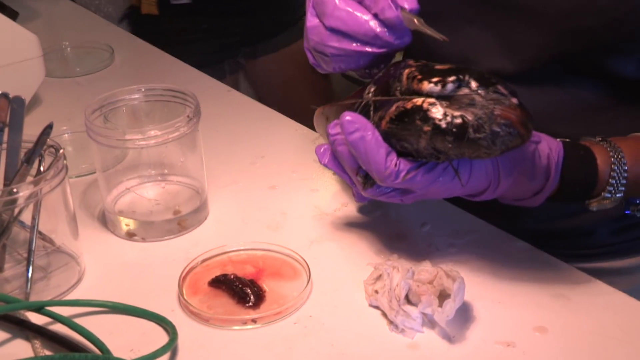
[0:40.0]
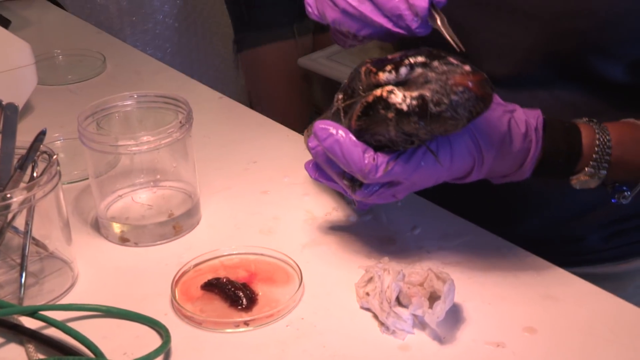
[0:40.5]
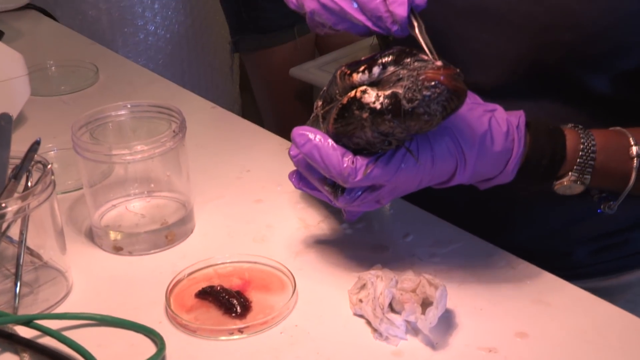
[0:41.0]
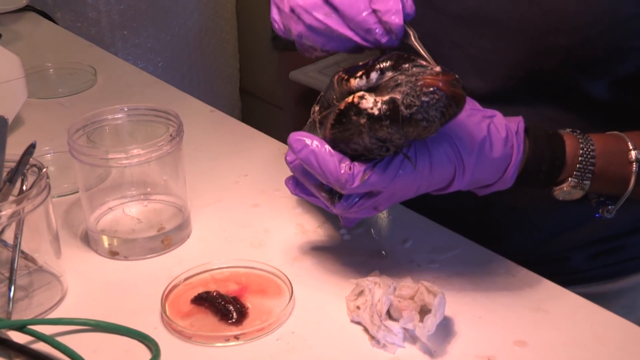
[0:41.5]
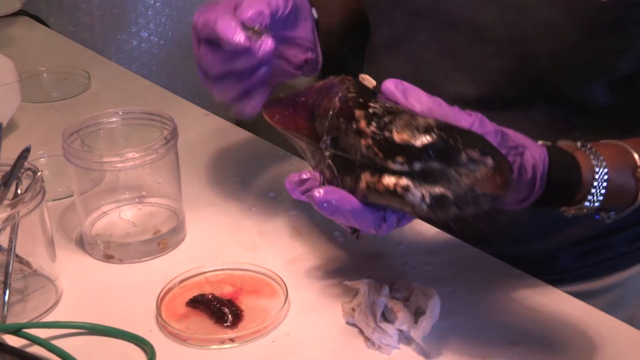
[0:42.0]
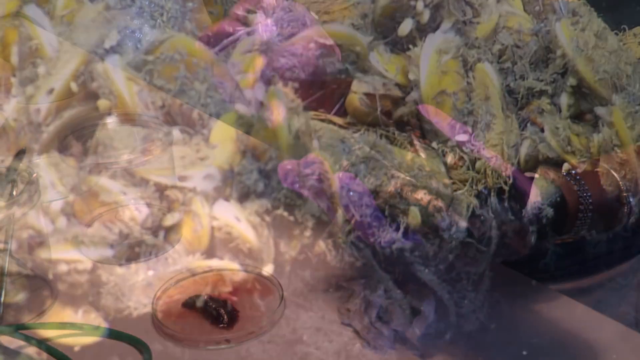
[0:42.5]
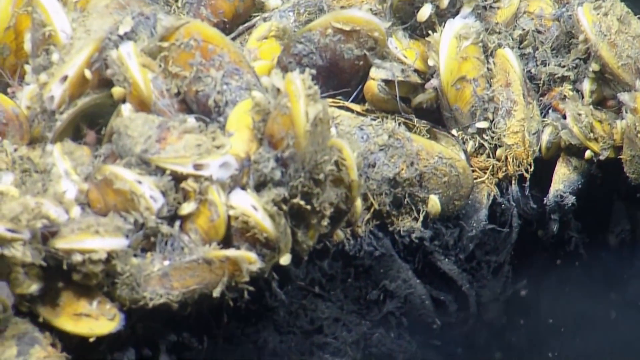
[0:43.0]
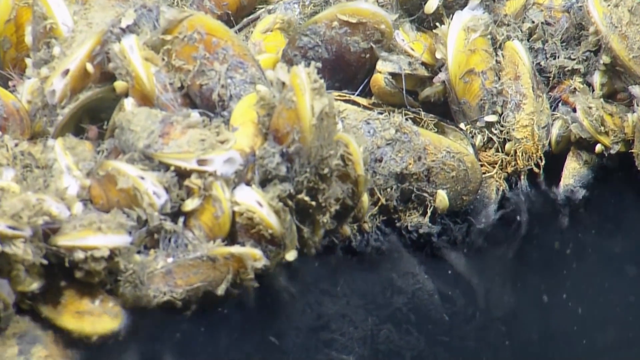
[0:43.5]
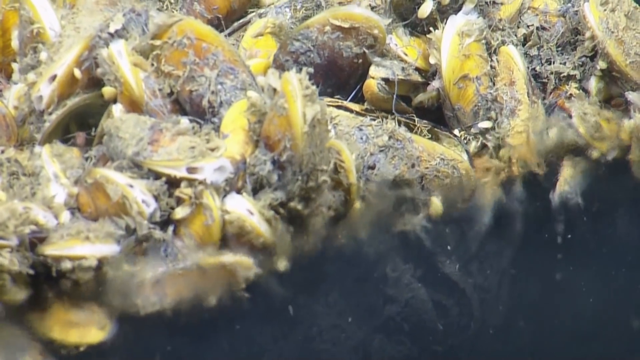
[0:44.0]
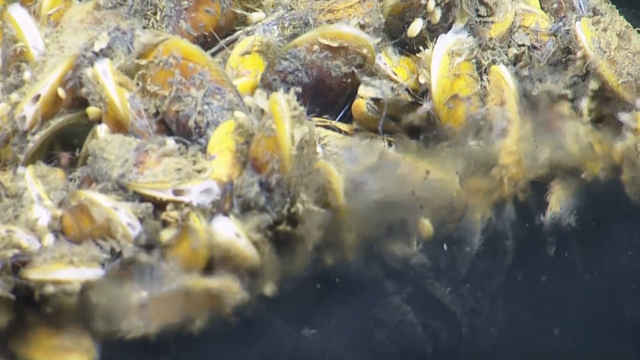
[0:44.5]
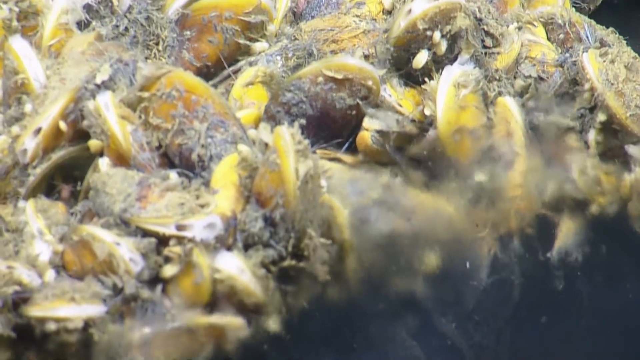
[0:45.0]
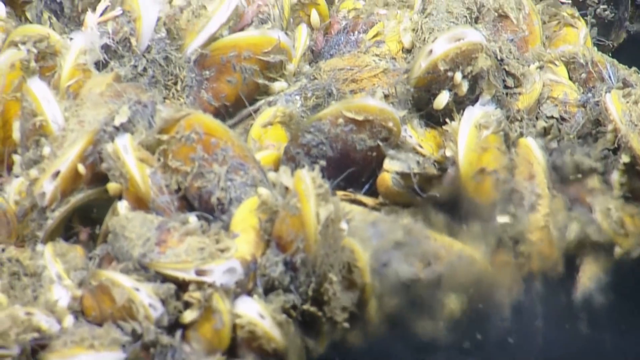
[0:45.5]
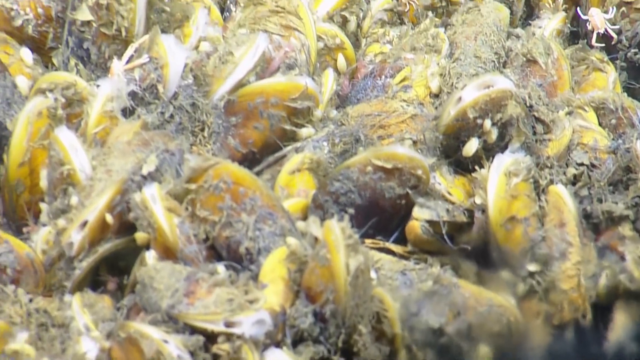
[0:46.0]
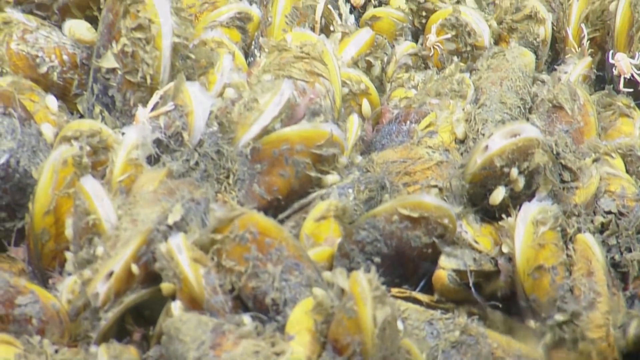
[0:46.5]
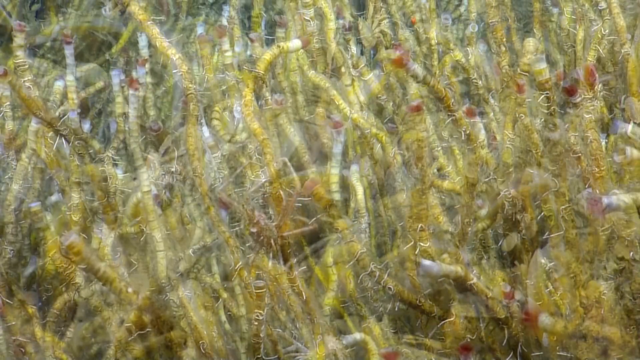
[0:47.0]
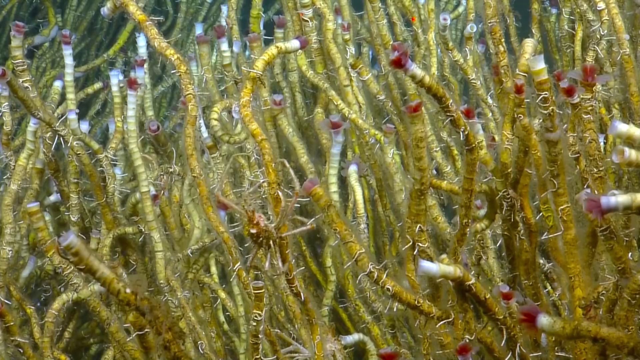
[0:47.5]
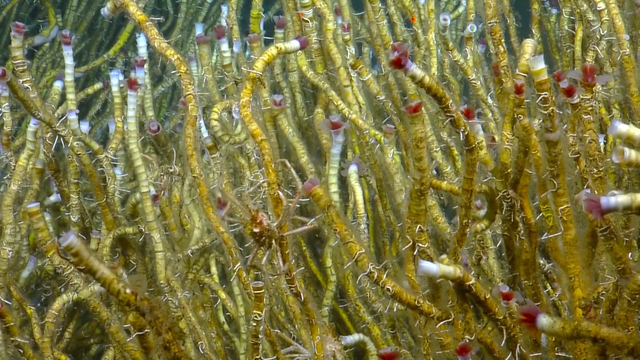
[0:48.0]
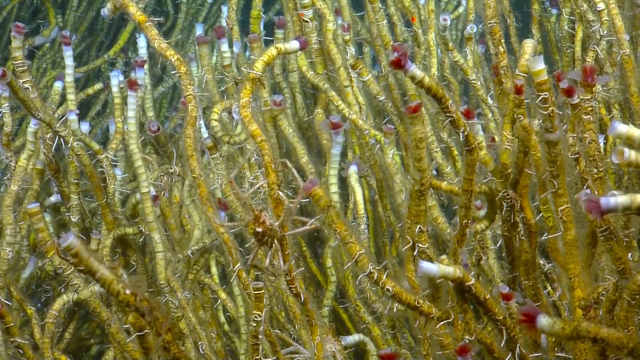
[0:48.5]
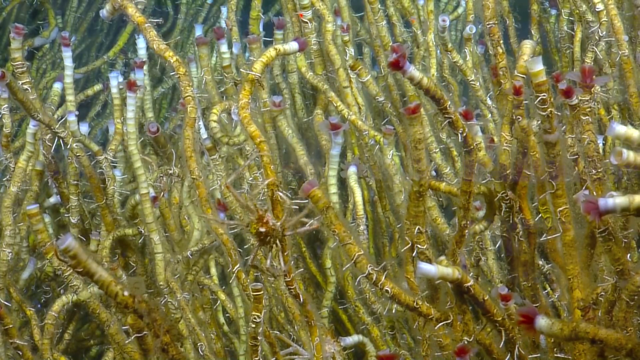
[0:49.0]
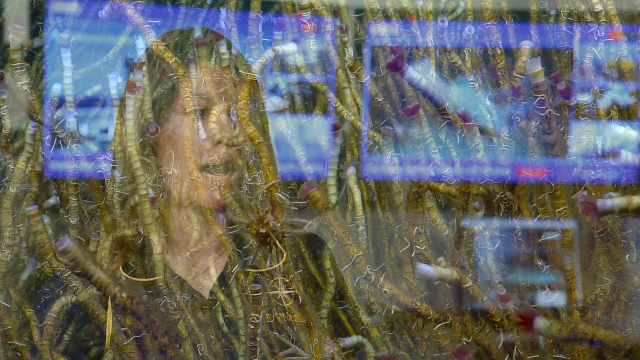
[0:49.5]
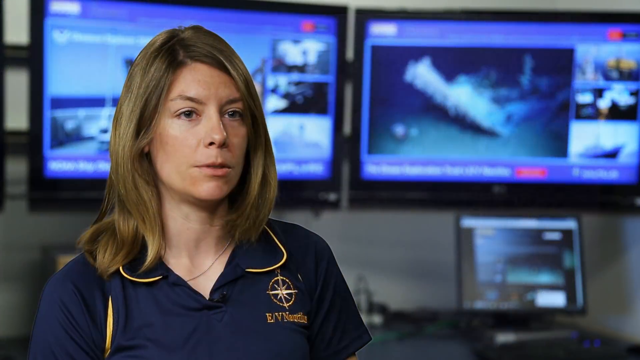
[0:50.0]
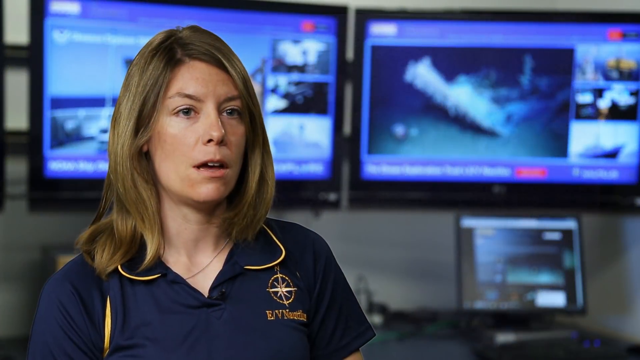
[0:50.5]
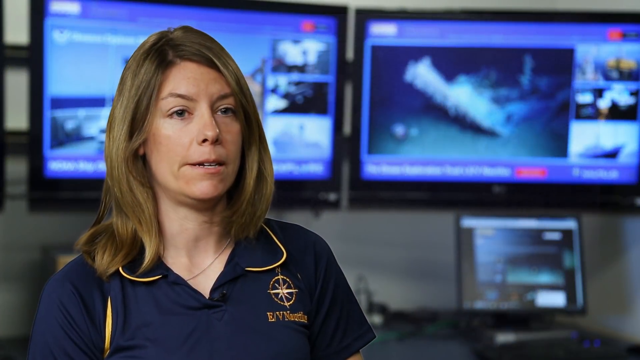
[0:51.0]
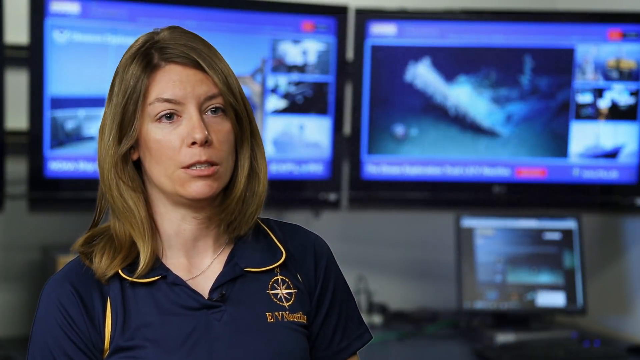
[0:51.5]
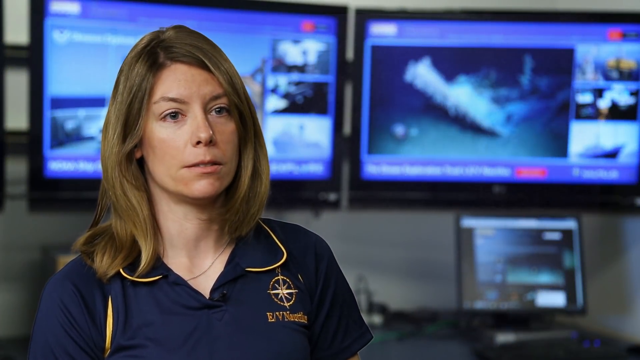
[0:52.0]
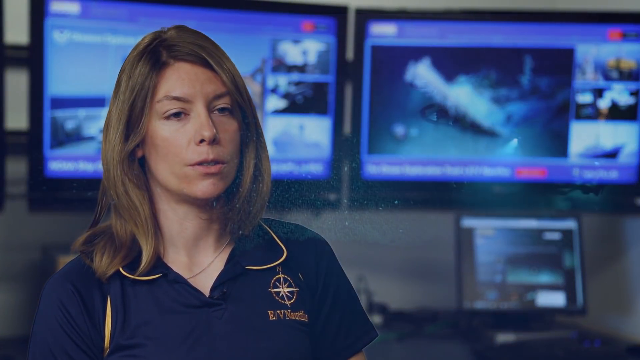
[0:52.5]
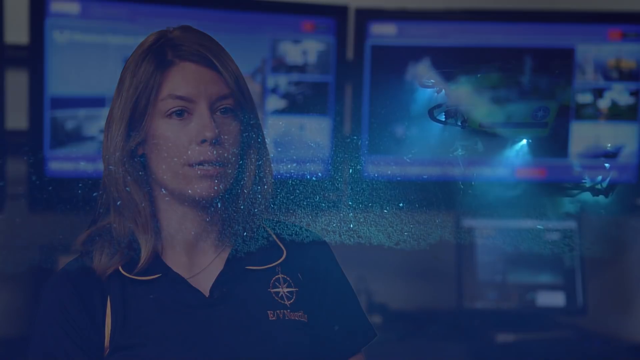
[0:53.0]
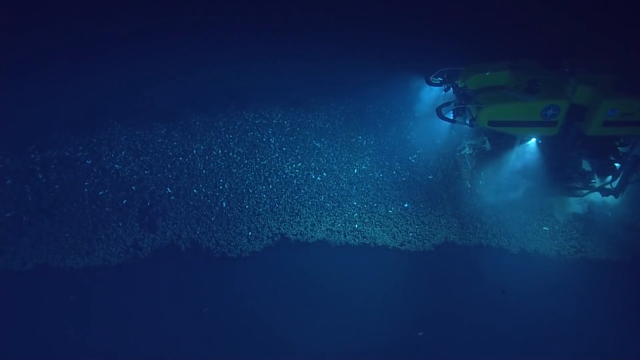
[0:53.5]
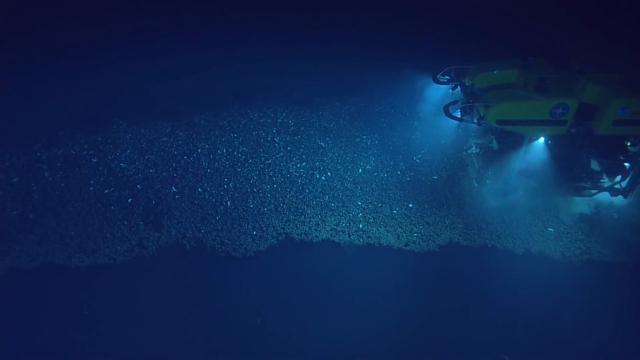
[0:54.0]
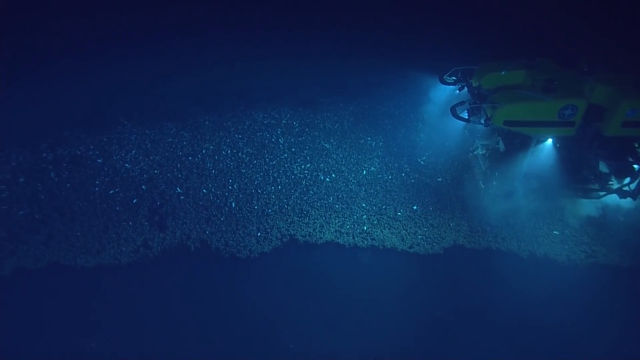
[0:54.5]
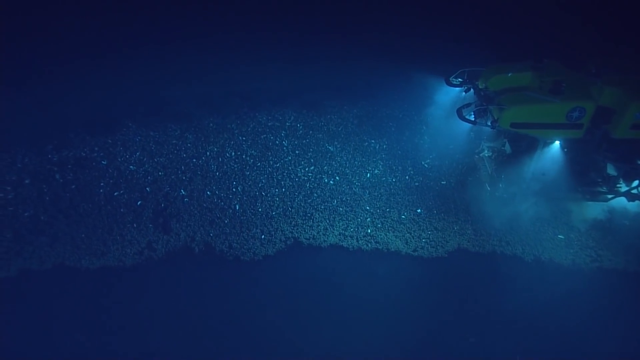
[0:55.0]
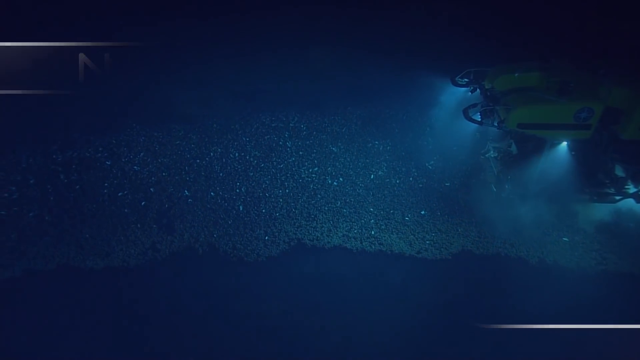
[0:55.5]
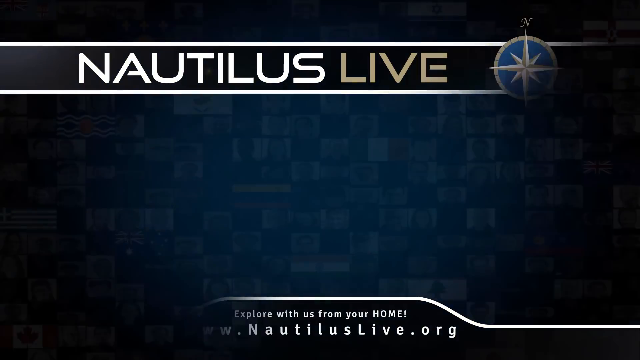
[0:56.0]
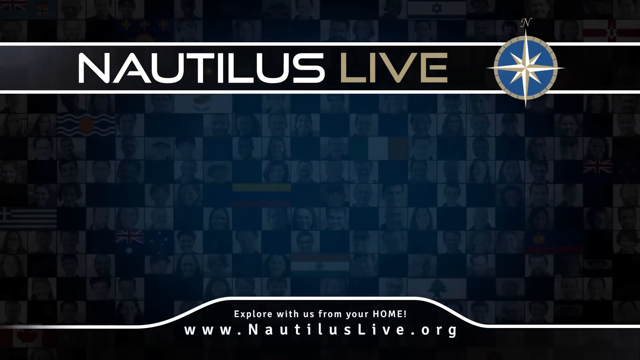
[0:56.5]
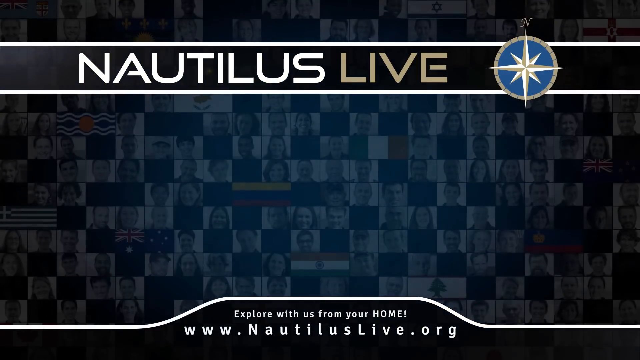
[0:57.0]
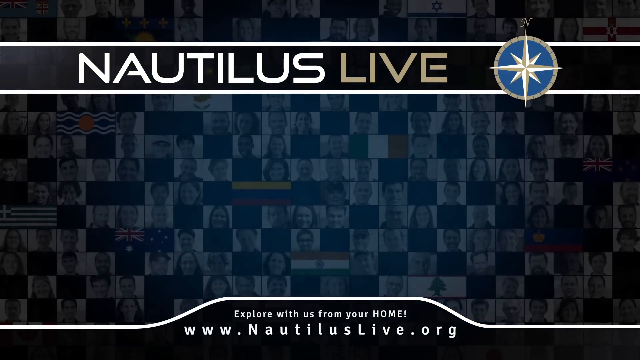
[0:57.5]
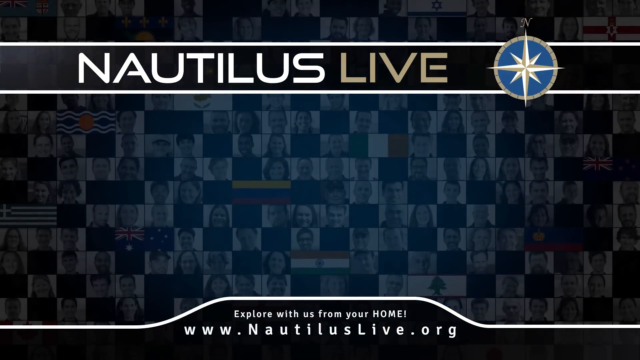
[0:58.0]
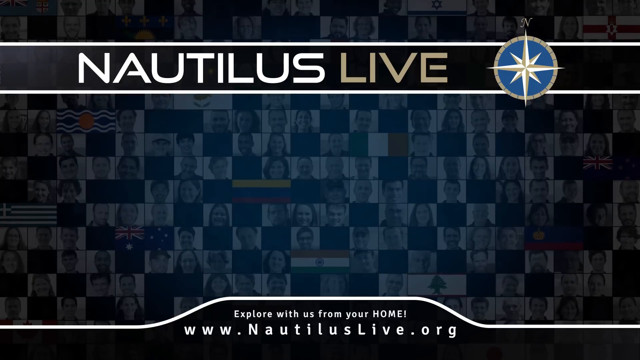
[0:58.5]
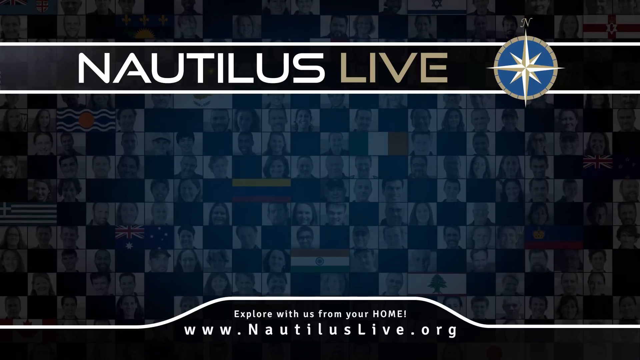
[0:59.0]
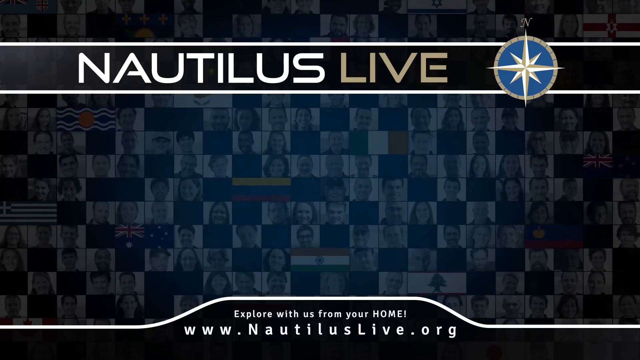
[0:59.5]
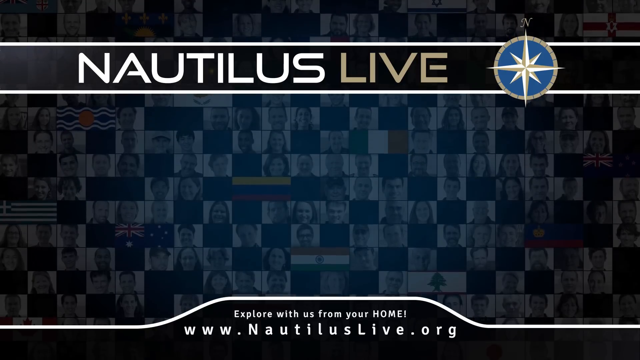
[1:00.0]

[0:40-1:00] Two arms and hands in purple latex gloves are shown; on the left wrist are a silver wristwatch and a gold bracelet. The person holds some kind of sea creature in their left hand; it is hard to say what it is, but it looks almost like a very long piece of muscle. In their right hand they hold a pair of tweezers. On the table in front of them are a Petri dish with a piece of red meat in it and a clear plastic cylinder. The scene shifts to a bunch of growth at the bottom of the ocean, hard to identify but apparently the same clumpy material the robot arm was pulling up. A bunch of elongated yellow tubes with red tips appear, and then the woman is seen speaking again.